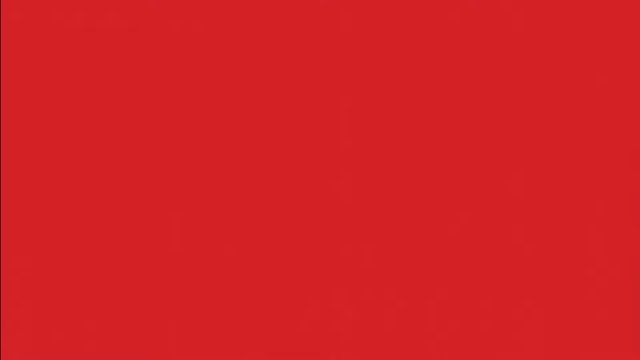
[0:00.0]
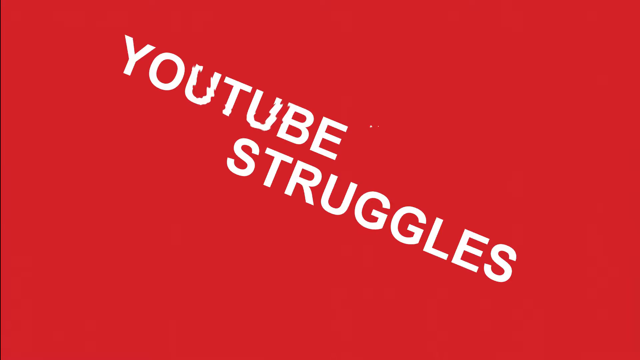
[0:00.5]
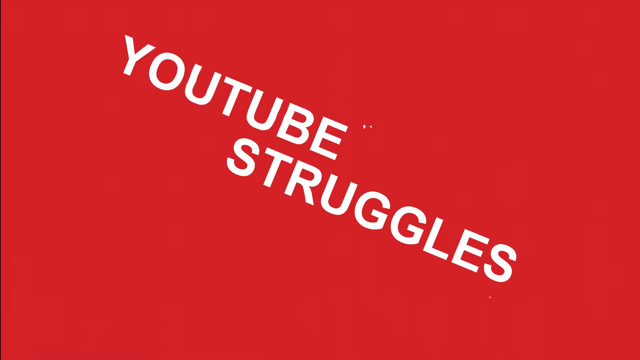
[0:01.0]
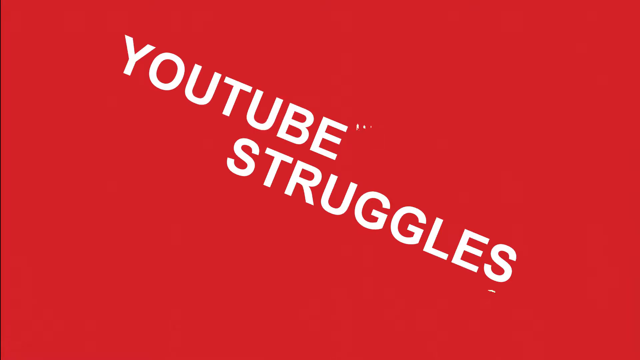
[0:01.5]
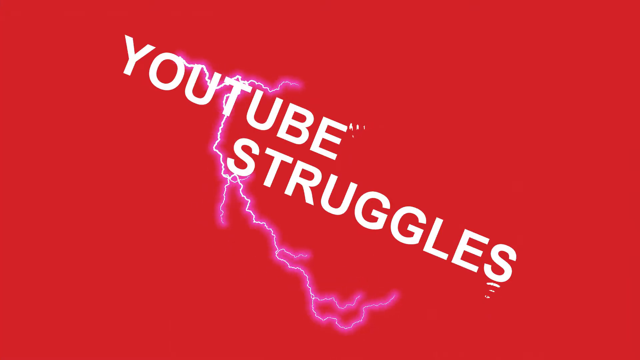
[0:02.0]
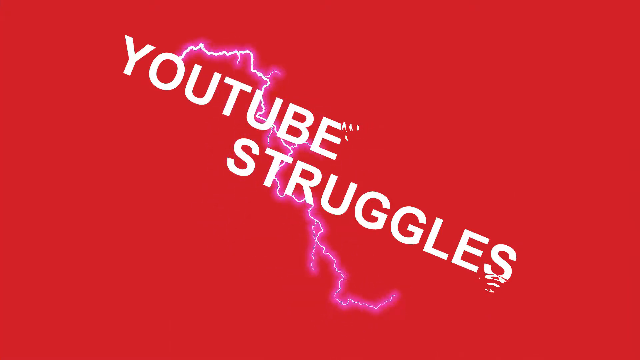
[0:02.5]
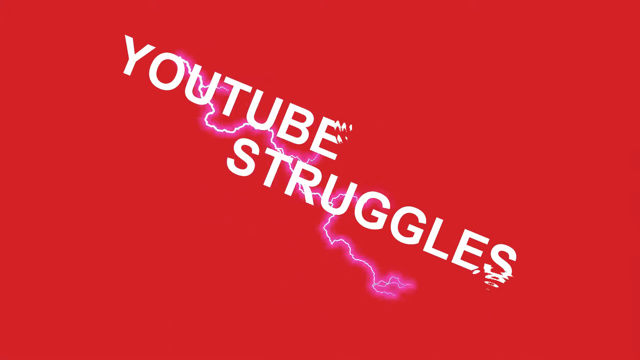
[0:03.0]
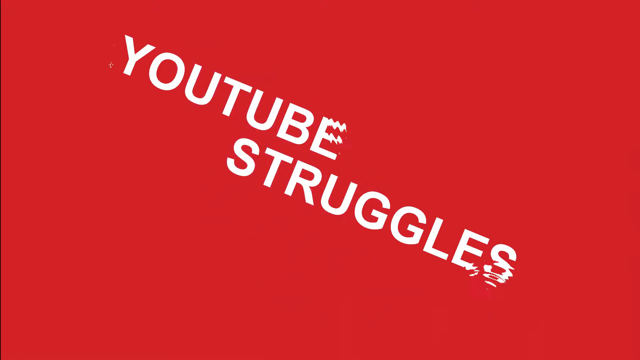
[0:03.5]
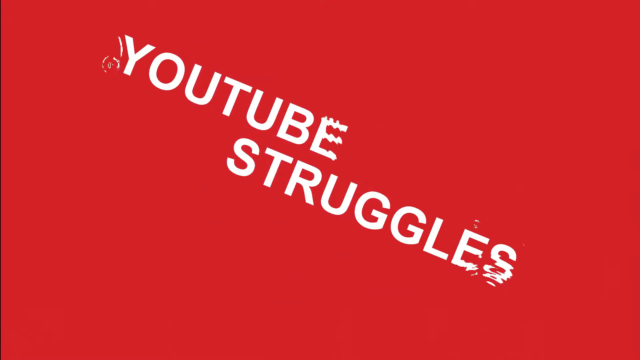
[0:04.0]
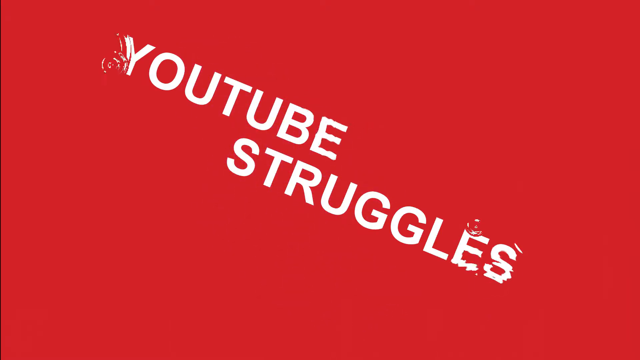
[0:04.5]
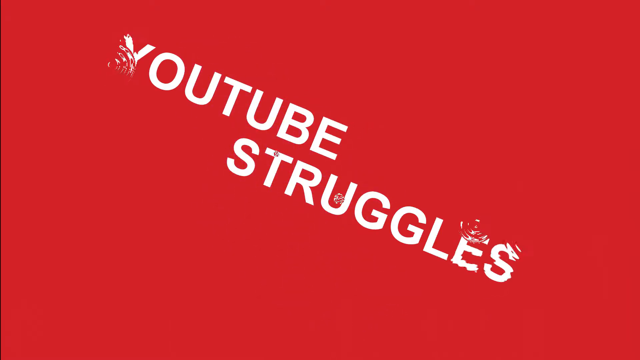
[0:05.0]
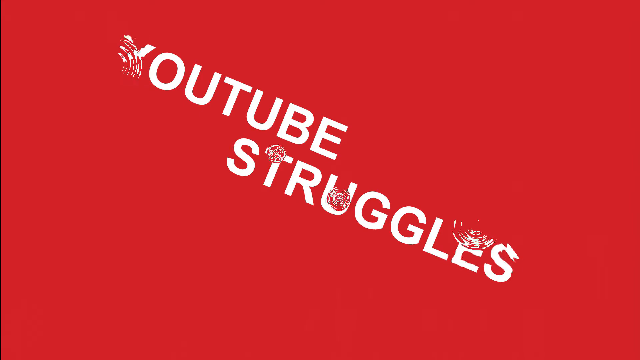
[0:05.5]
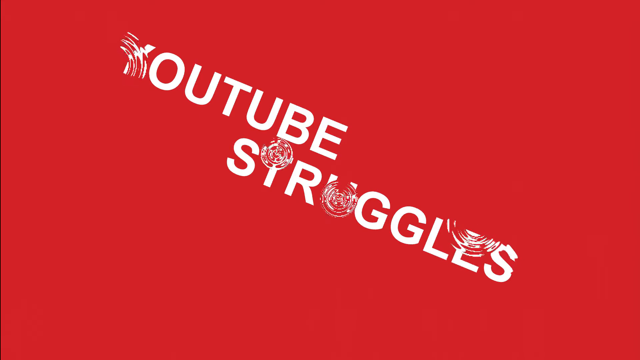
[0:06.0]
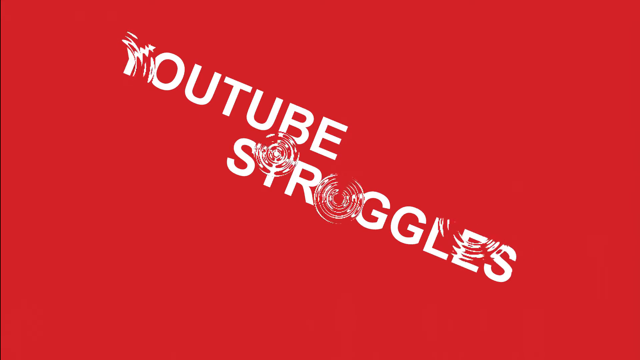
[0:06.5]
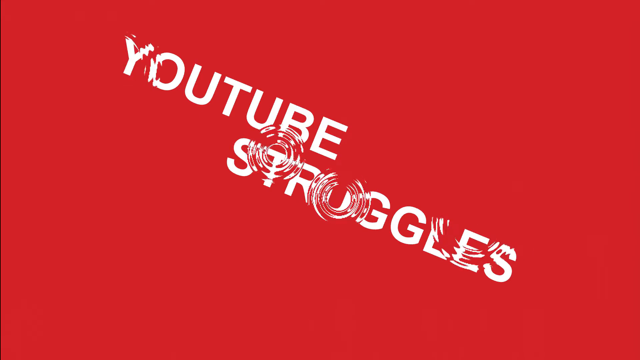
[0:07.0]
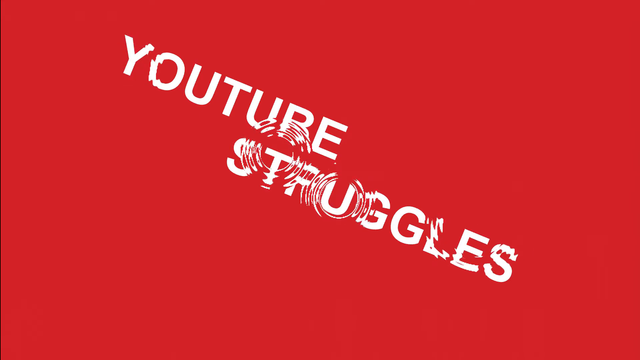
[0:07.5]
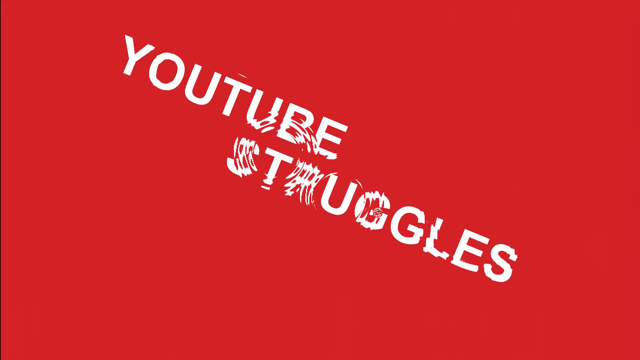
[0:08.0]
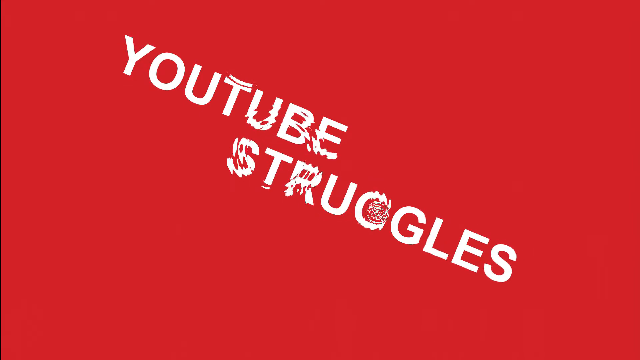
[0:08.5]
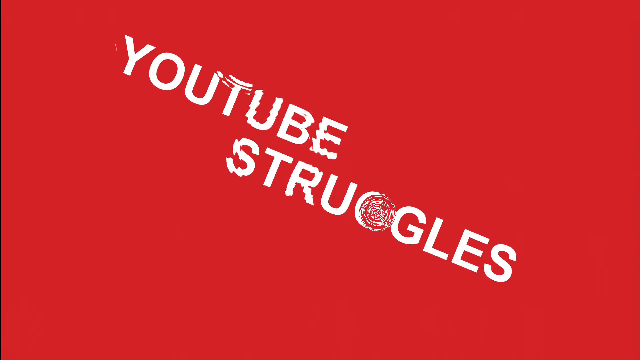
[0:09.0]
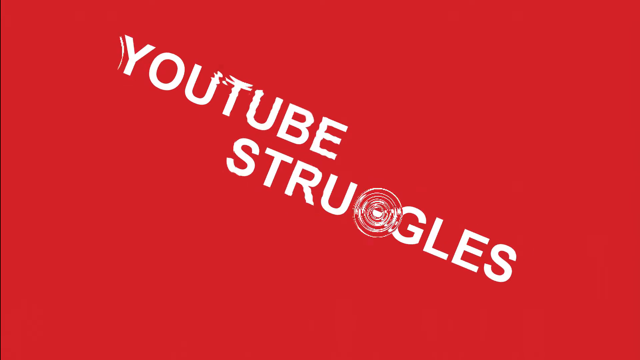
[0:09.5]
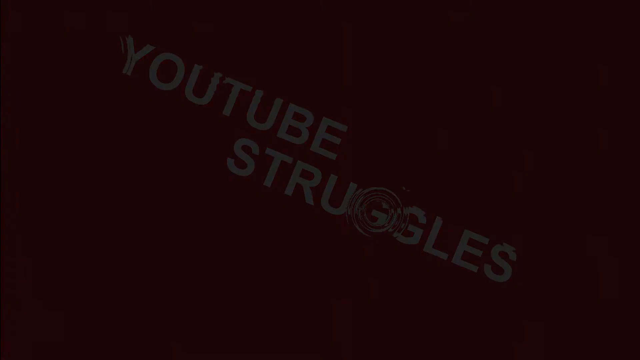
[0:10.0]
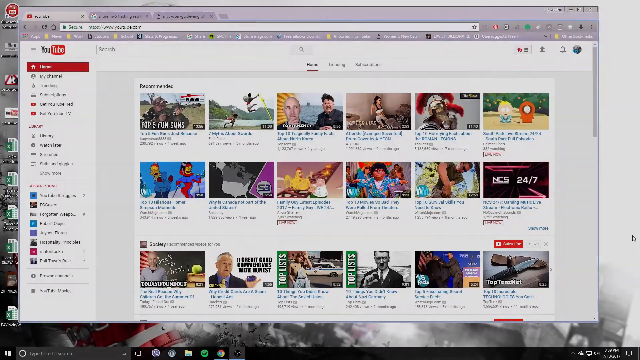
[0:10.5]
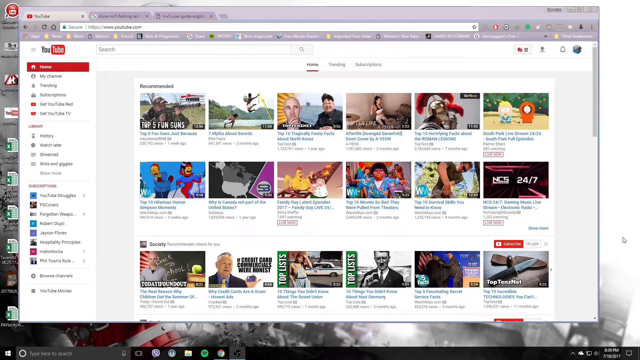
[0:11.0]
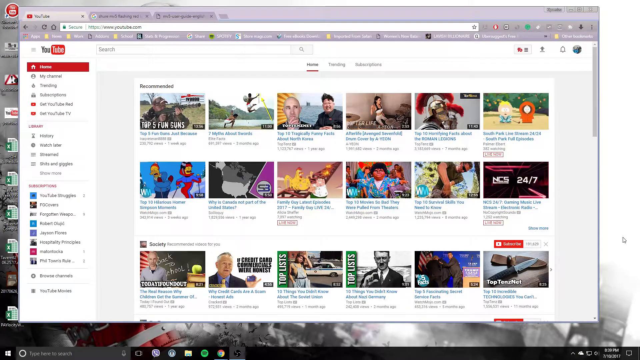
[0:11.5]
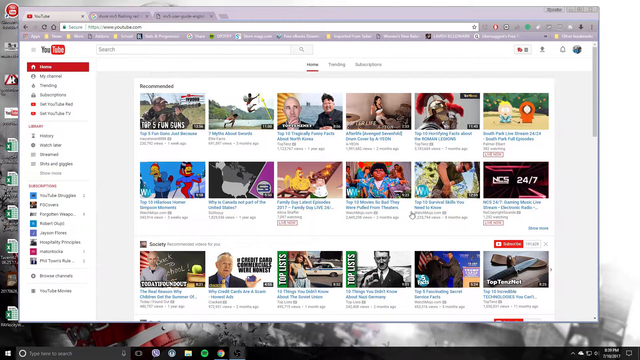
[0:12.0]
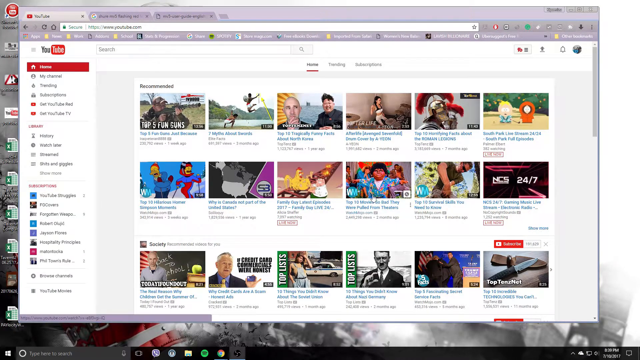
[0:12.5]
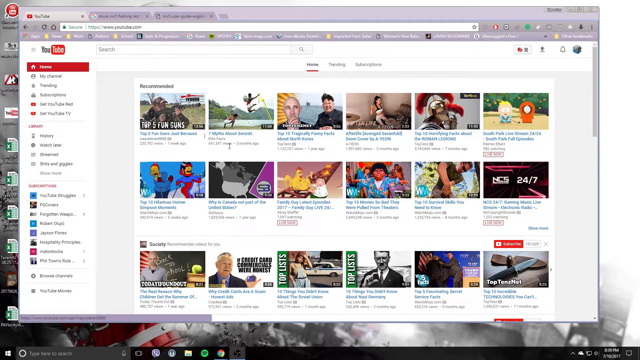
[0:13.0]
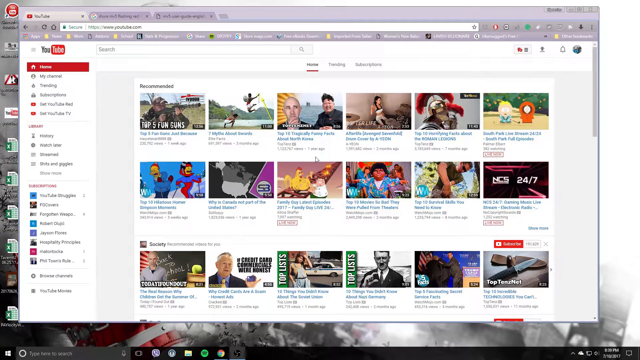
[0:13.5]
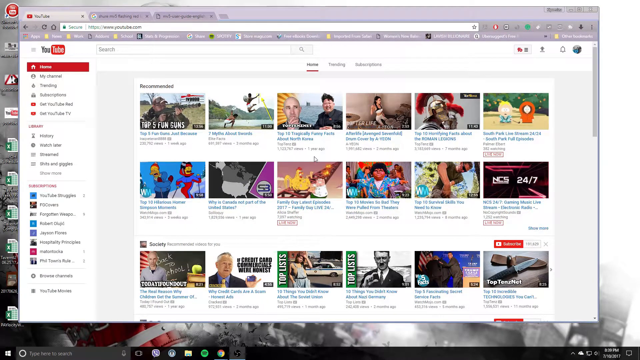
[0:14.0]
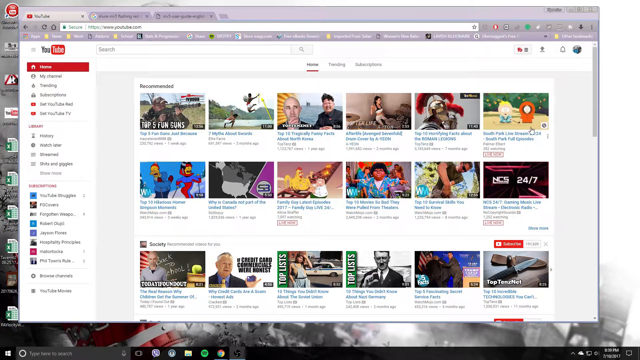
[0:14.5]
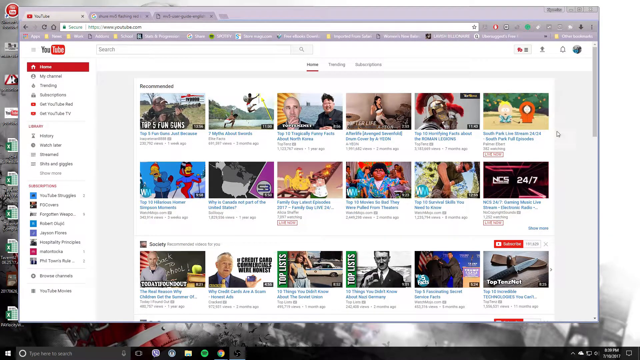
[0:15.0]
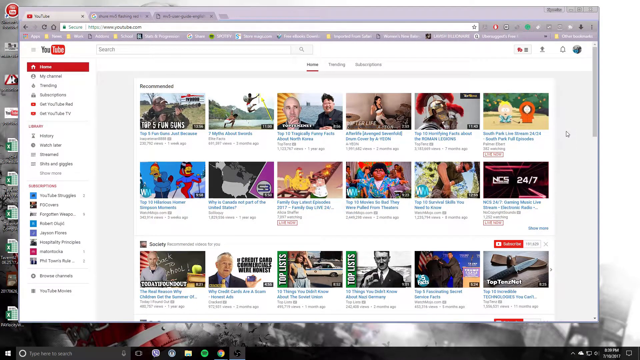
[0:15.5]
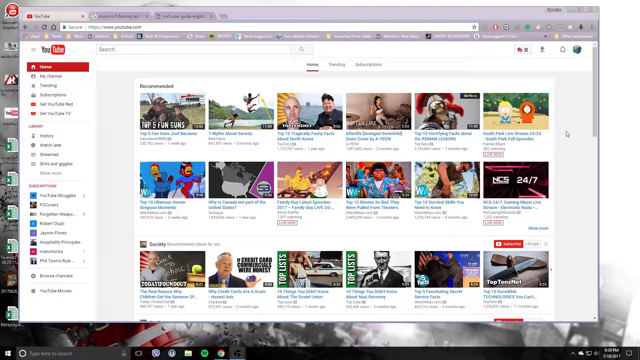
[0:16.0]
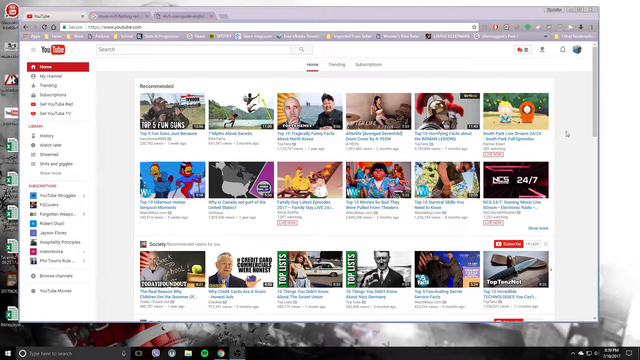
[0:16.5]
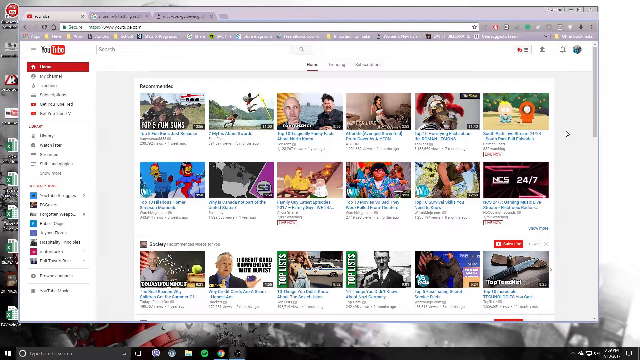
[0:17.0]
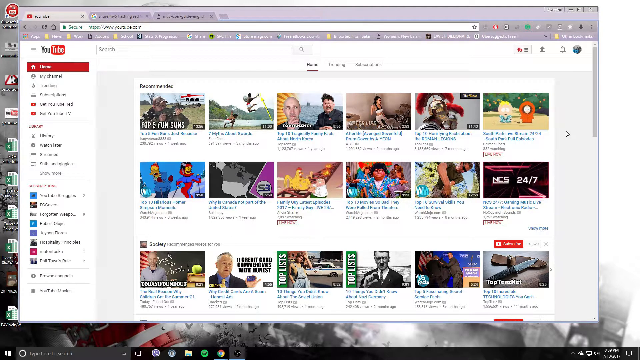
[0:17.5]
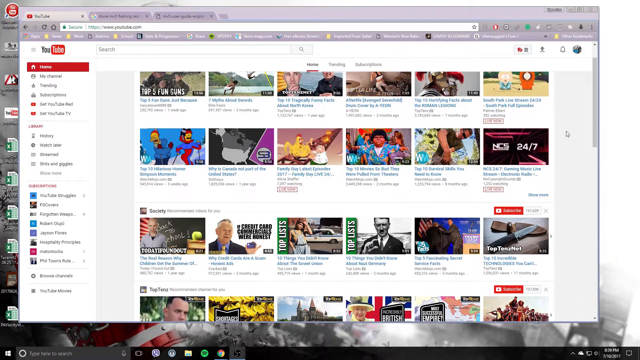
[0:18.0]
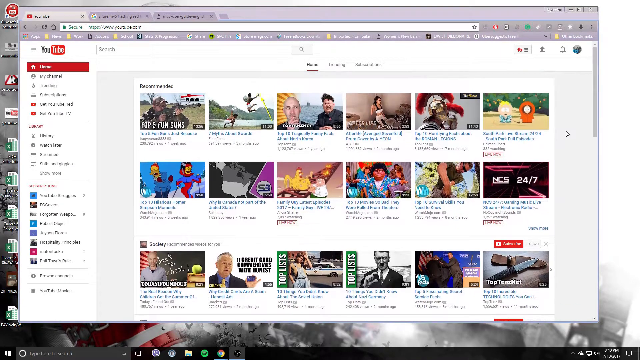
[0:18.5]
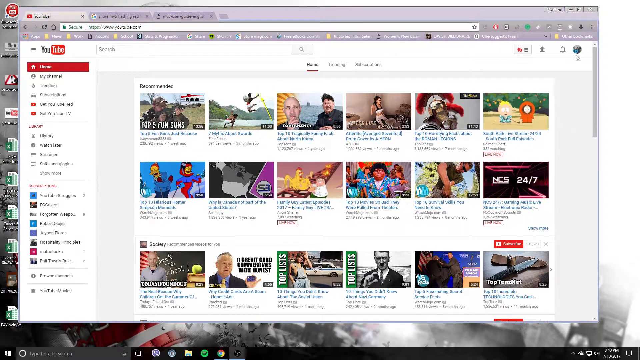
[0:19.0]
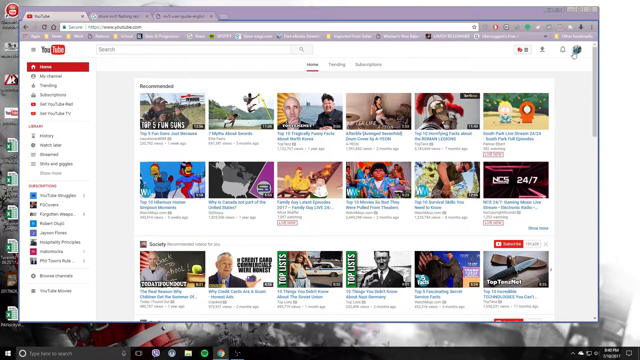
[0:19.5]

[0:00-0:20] The video opens on a solid red screen with no text or images. White all-capital text then appears diagonally across the center, reading "YouTube Struggles." A lightning bolt comes out of or goes across the words, running from the O in YouTube down through the U in YouTube and the T in Struggles, reaching the center bottom of the frame. It moves a little, and the words "YouTube Struggles" start to move like ripples on a pond. The scene transitions to a black screen and then to a view of a YouTube page: a white background, a menu on the left side, and small rectangular clips of videos. The cursor moves around a little, and the page scrolls up and down.